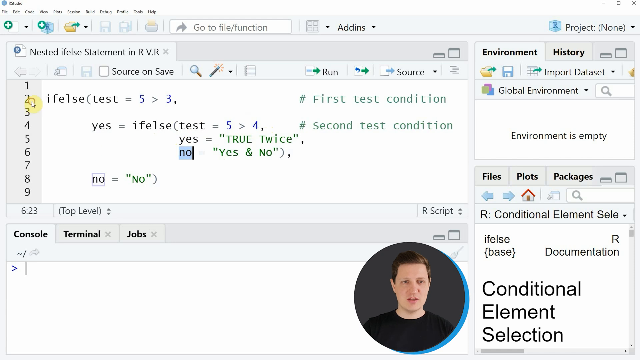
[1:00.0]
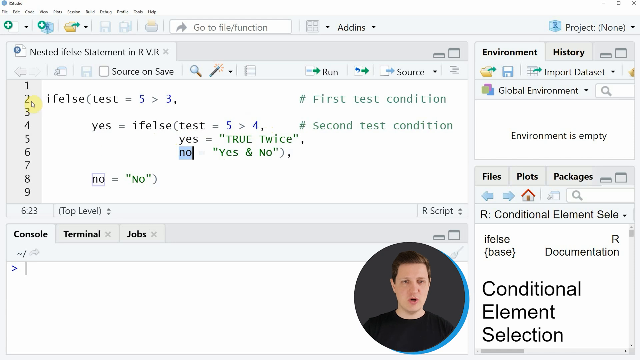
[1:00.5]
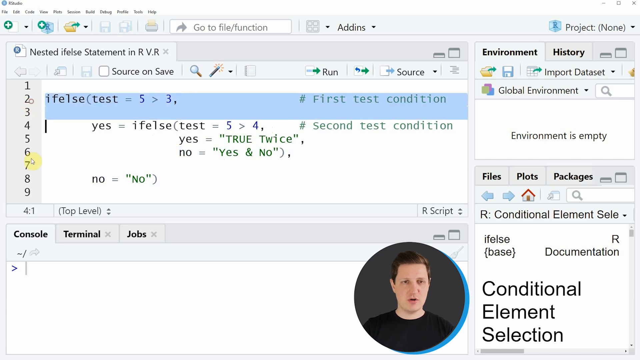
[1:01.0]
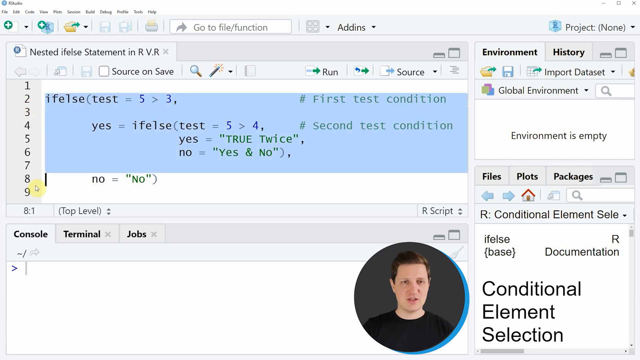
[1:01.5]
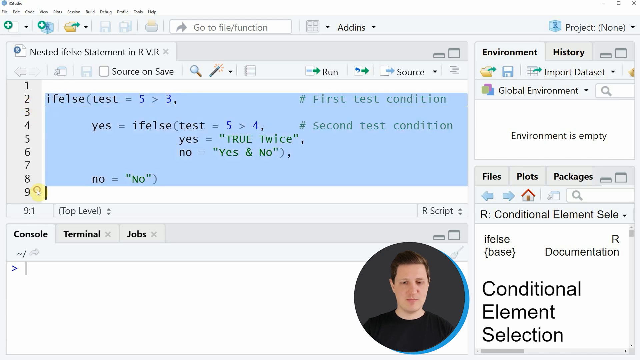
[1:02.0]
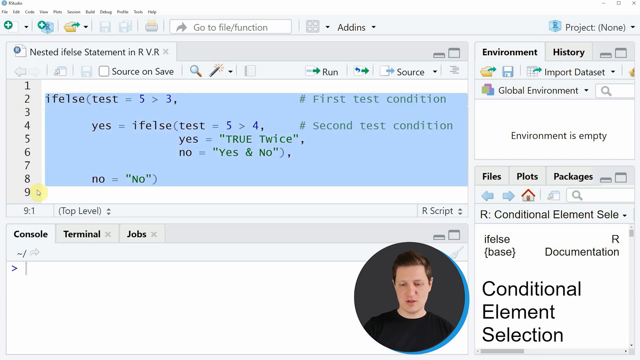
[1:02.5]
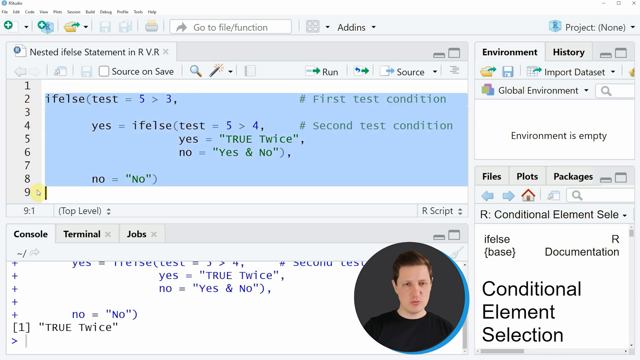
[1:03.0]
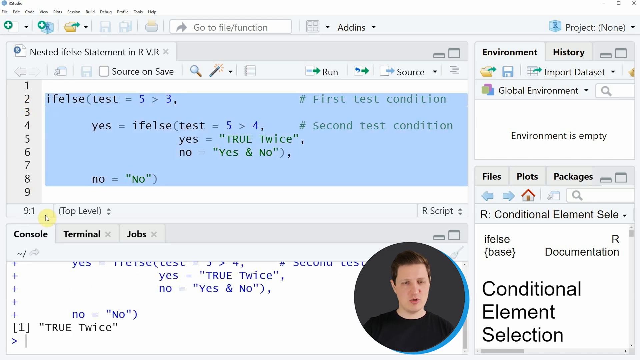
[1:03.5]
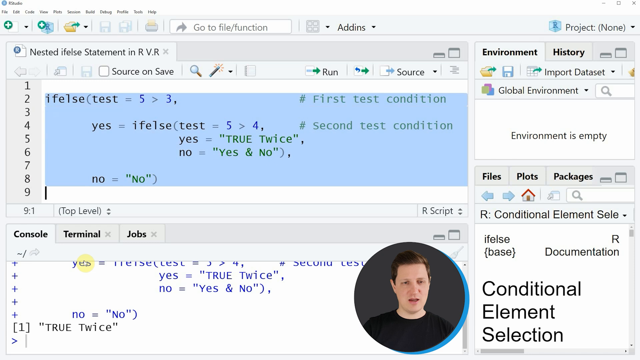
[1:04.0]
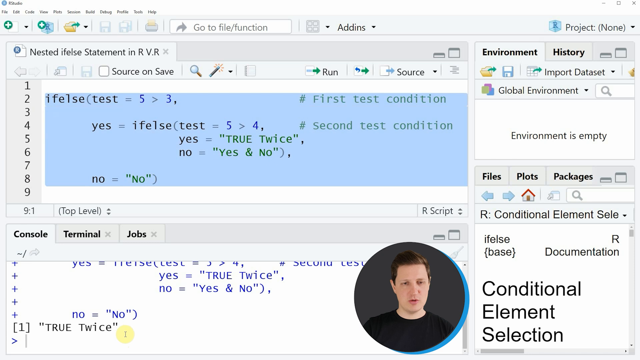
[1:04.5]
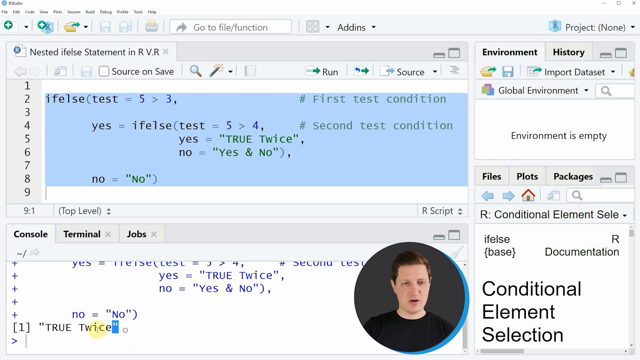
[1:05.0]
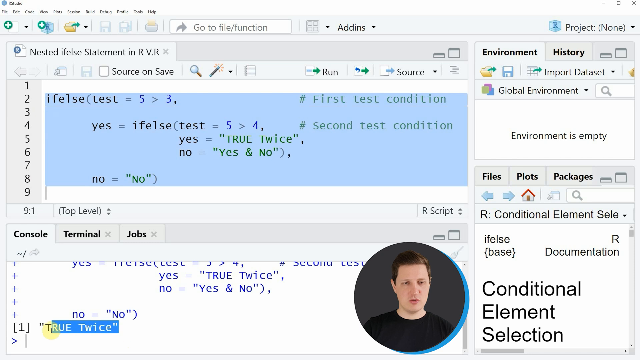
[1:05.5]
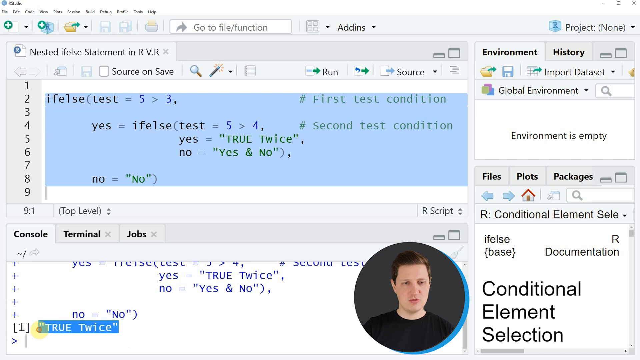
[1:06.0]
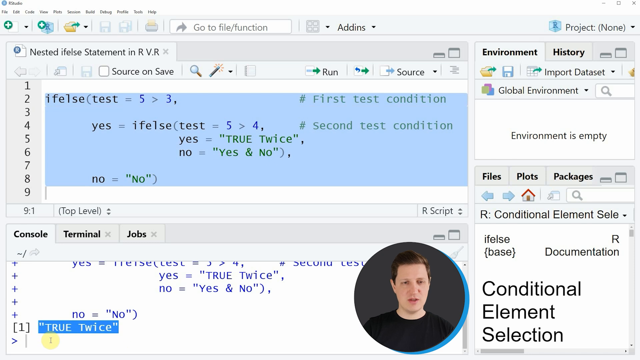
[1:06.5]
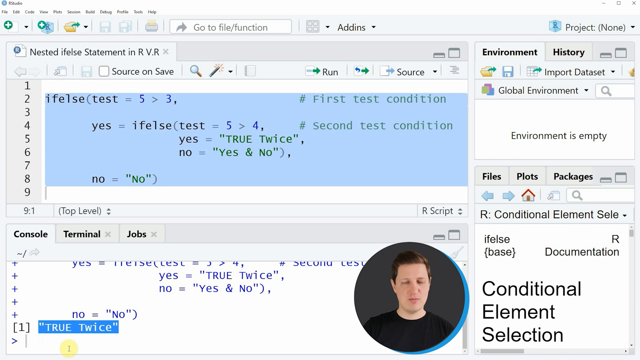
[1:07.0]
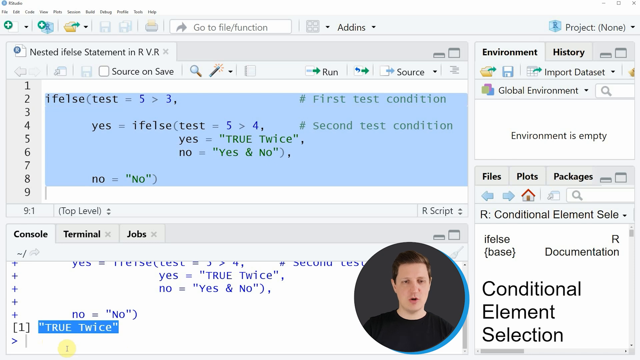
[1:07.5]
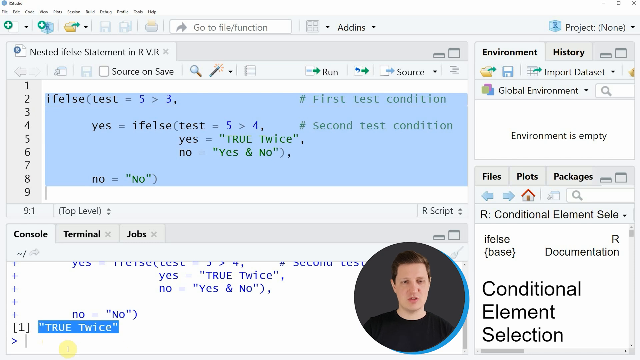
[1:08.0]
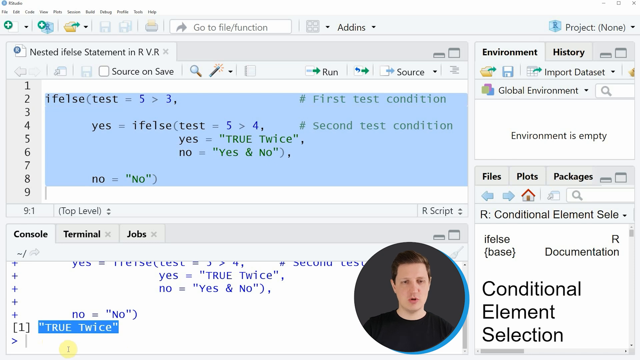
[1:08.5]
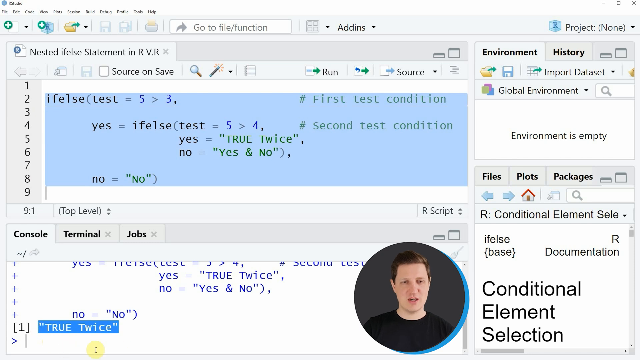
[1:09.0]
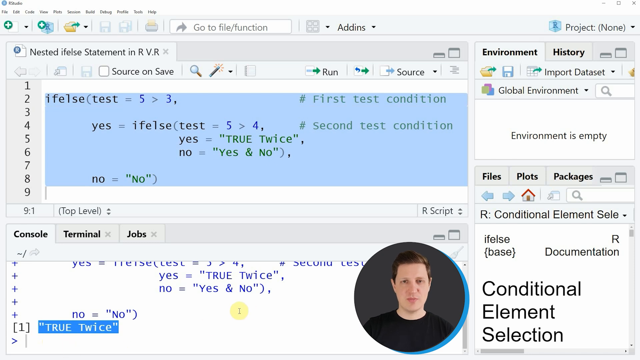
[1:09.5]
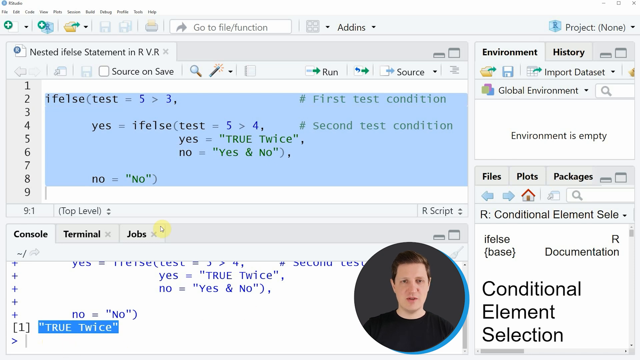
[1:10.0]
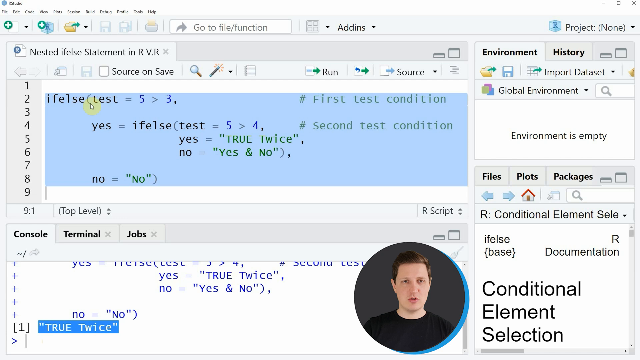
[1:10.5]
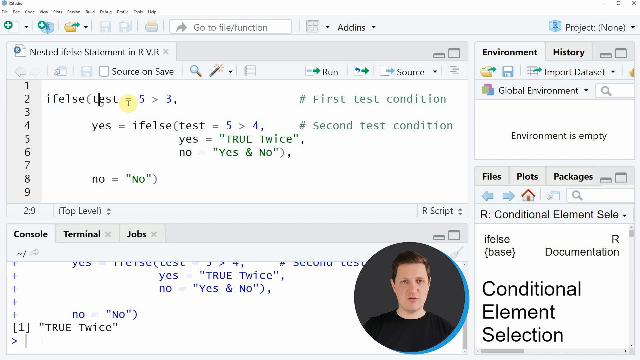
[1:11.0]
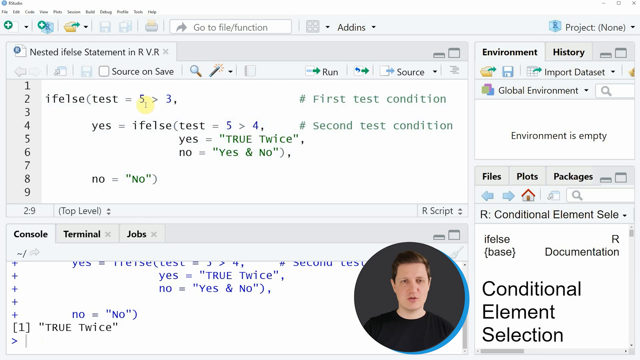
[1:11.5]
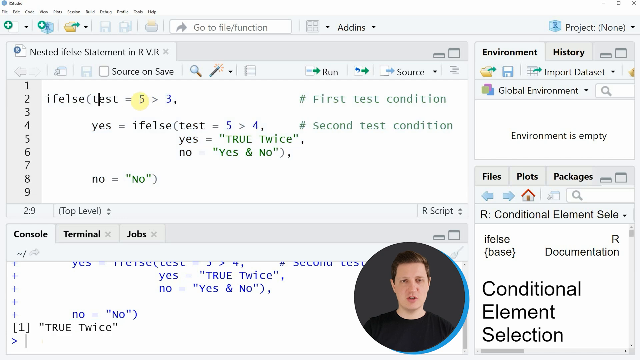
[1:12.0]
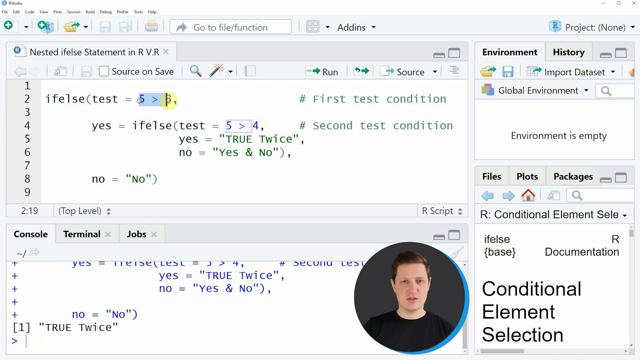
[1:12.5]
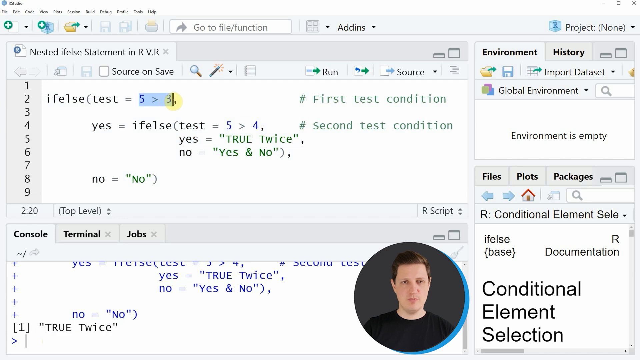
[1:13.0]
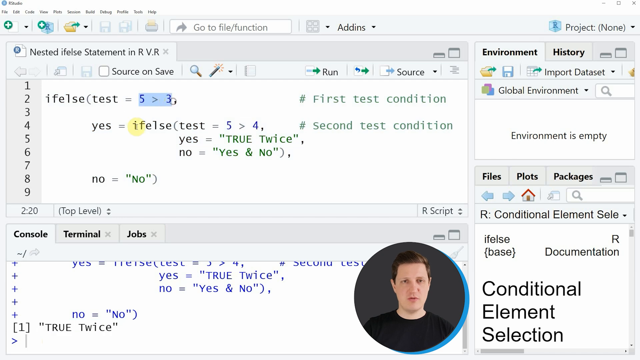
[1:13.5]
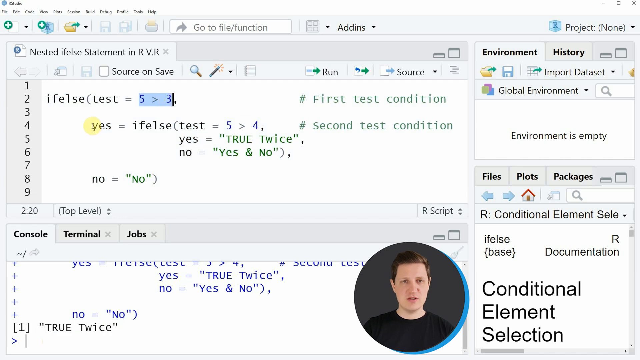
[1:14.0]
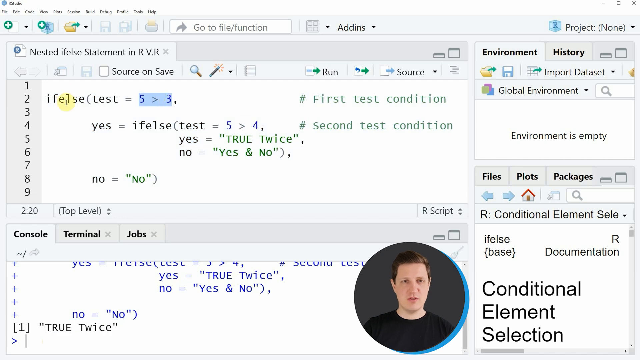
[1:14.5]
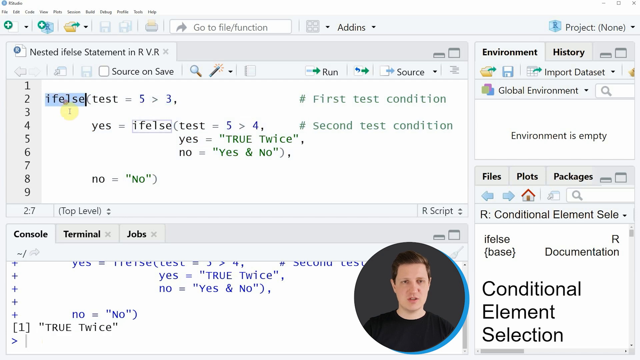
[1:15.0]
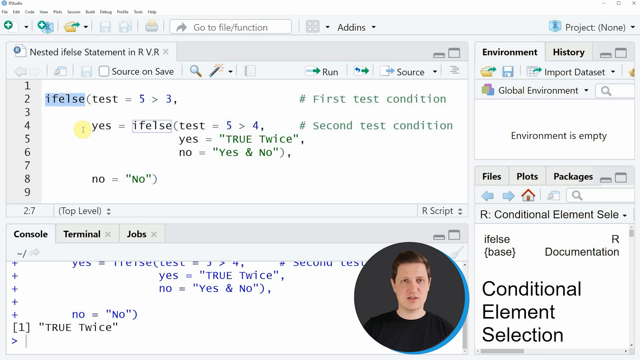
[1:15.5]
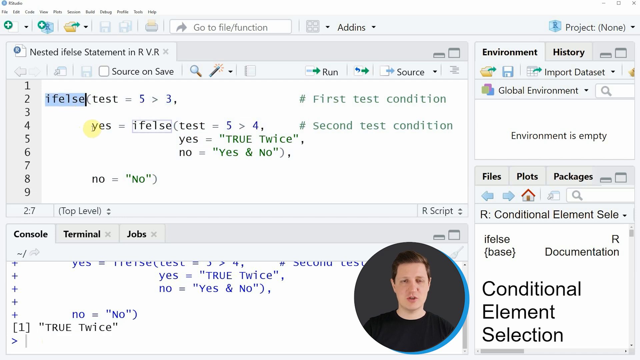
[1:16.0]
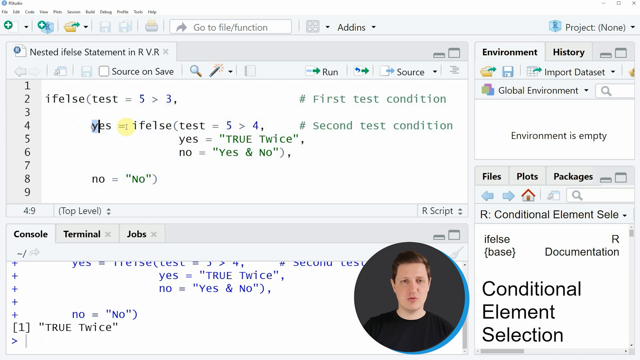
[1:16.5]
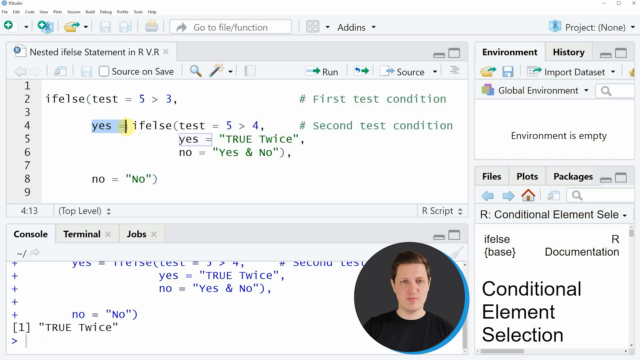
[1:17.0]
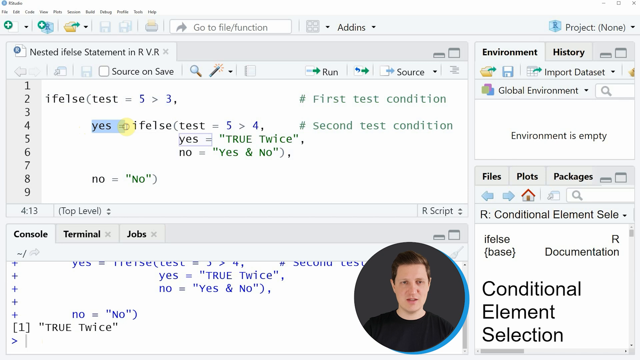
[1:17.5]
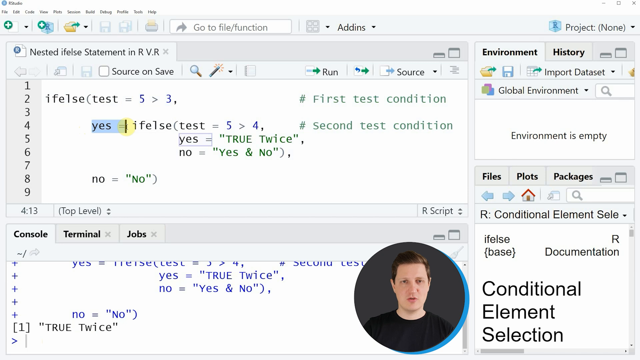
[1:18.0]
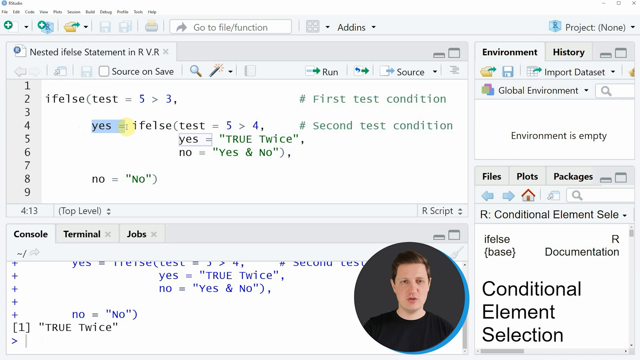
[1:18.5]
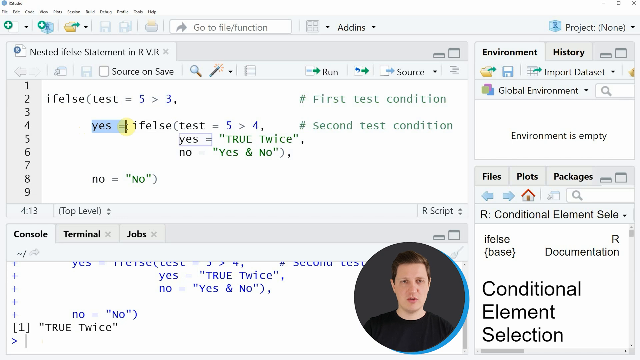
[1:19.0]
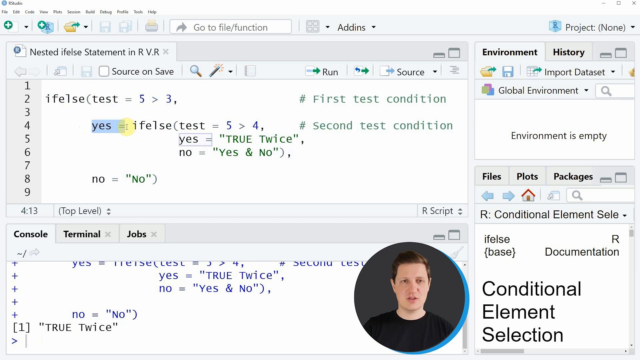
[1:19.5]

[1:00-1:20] The cursor clicks the number 2 on the left side of the top left nested ifelse statement panel and drags down to number 9, highlighting lines 2 through 8 in light blue. The cursor then goes down to the console panel at the bottom left of the screen, where it selects and highlights the words "true twice", which are in quotes. The mouse moves back up to line 2 in the top panel, where it highlights "5 > 3" and then the "ifelse" text on line 2. The cursor then goes down to line 4 and selects the first "yes" and equal sign.